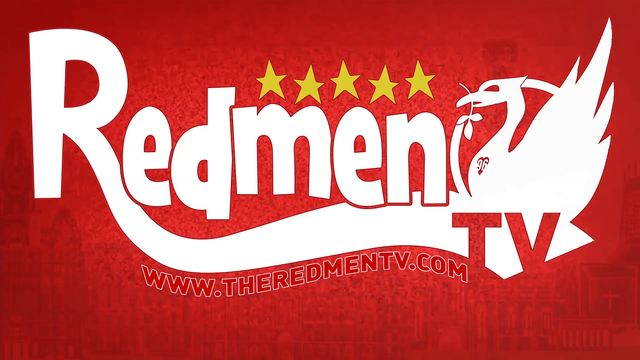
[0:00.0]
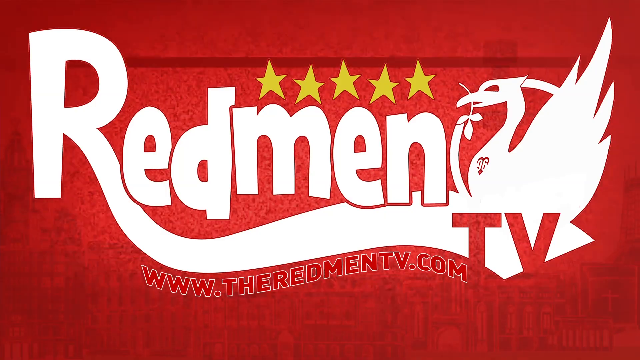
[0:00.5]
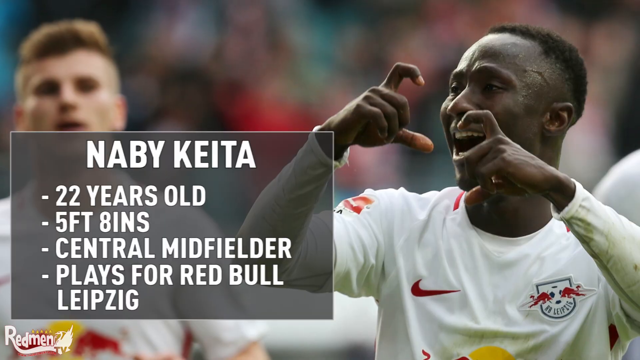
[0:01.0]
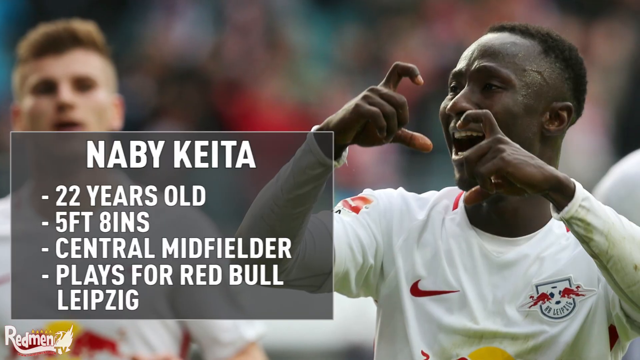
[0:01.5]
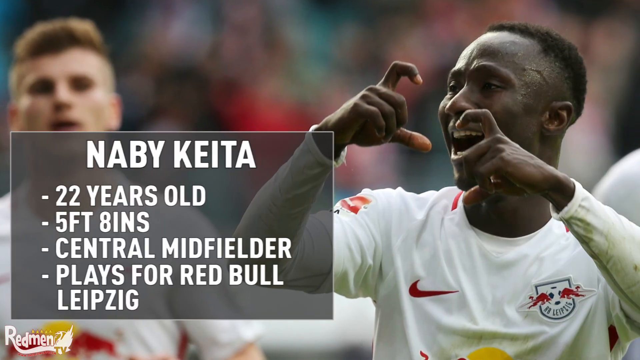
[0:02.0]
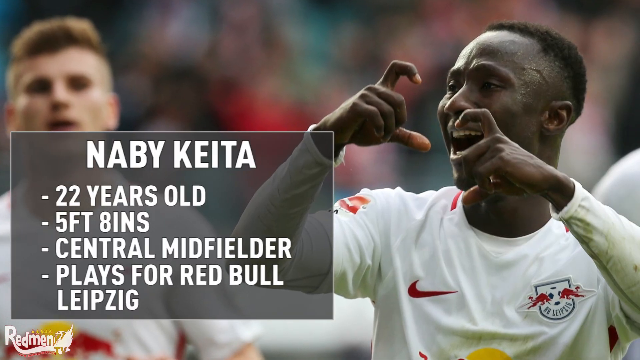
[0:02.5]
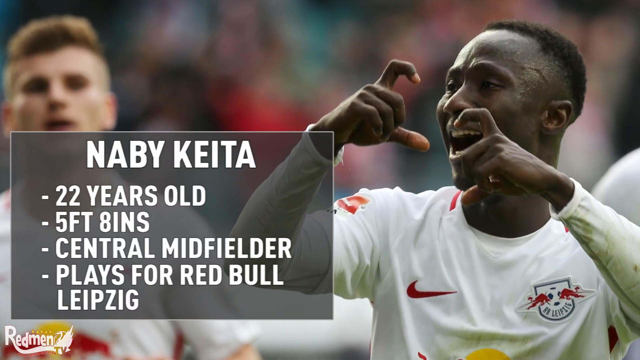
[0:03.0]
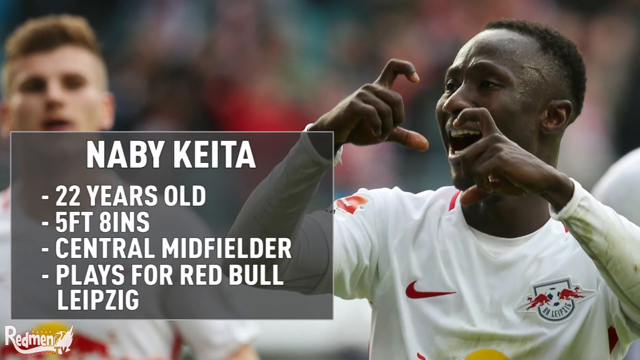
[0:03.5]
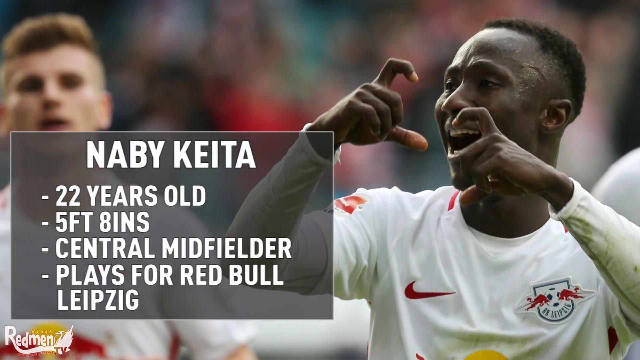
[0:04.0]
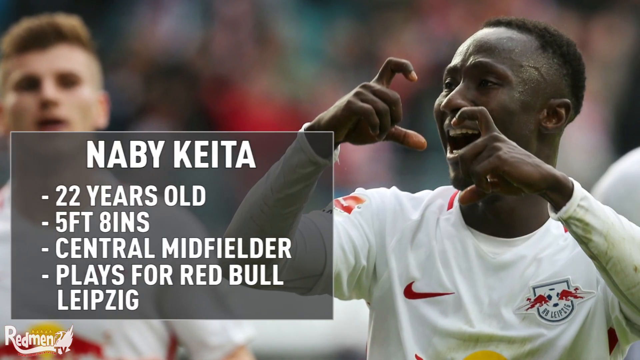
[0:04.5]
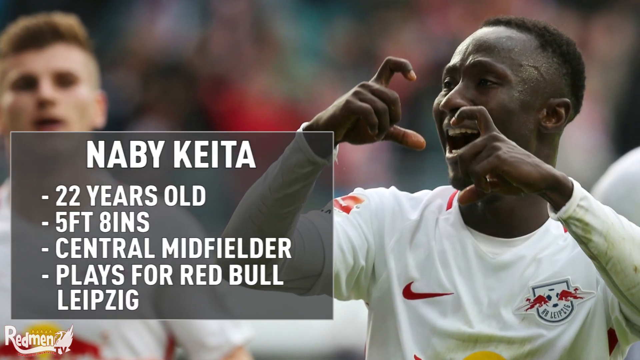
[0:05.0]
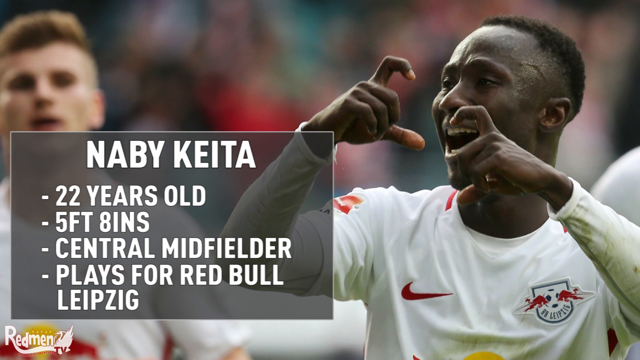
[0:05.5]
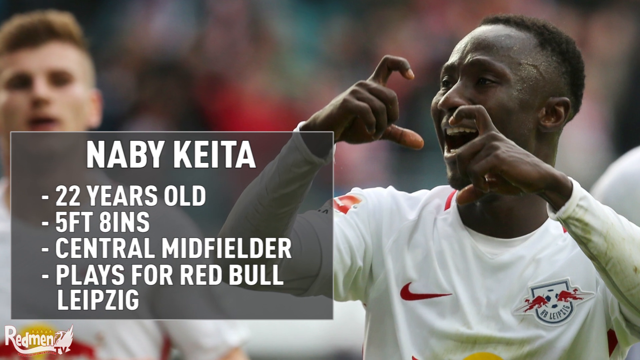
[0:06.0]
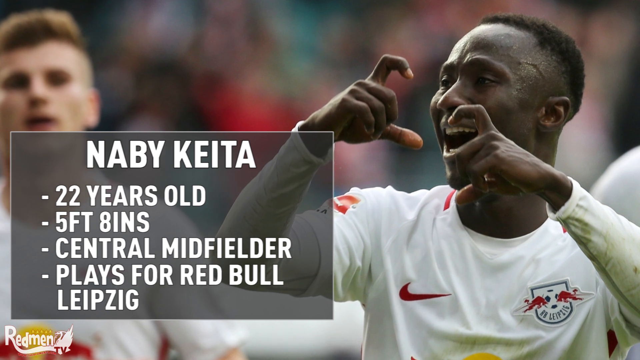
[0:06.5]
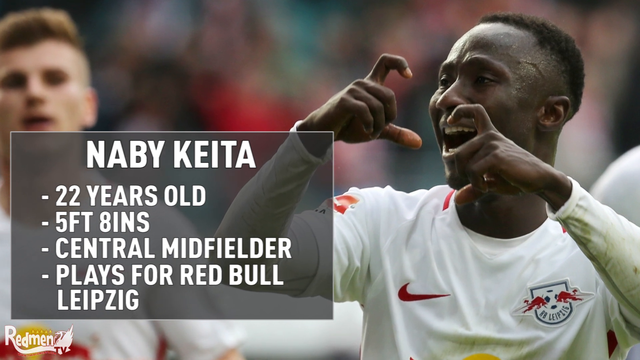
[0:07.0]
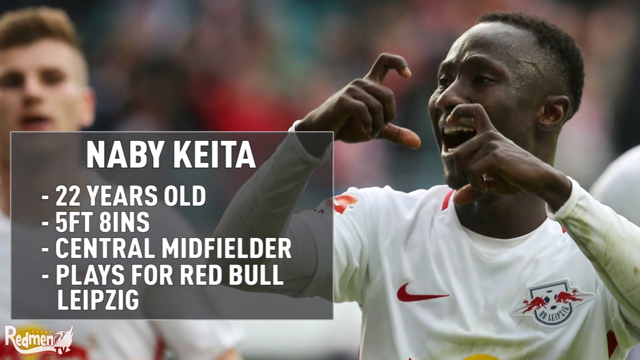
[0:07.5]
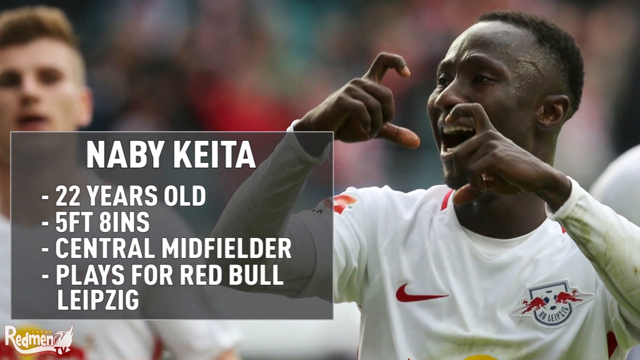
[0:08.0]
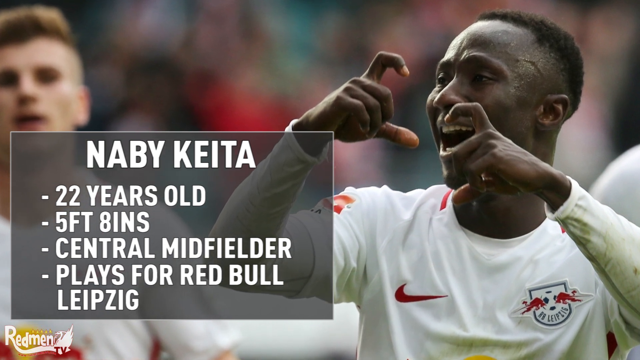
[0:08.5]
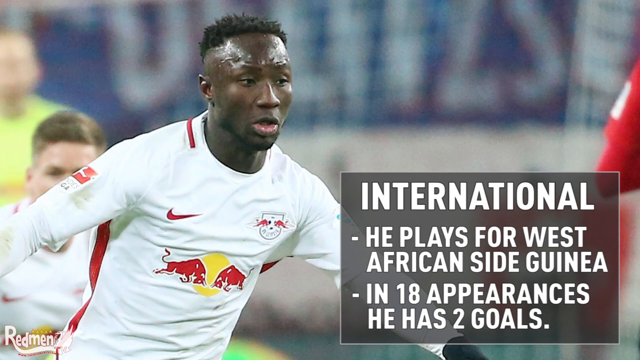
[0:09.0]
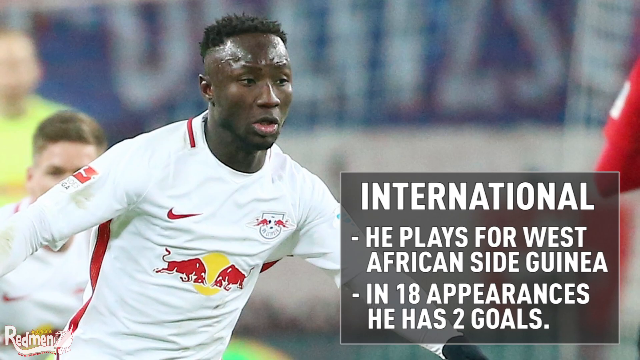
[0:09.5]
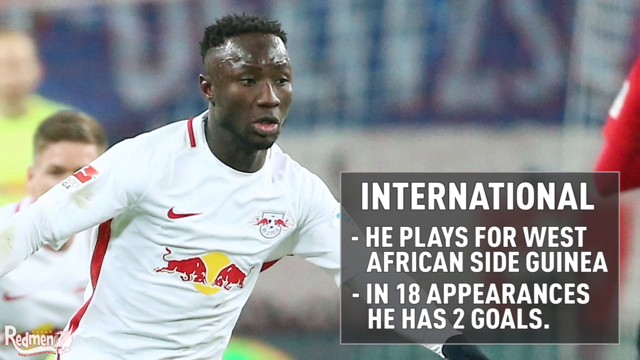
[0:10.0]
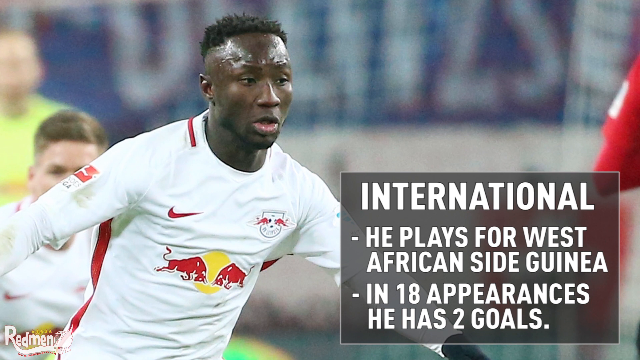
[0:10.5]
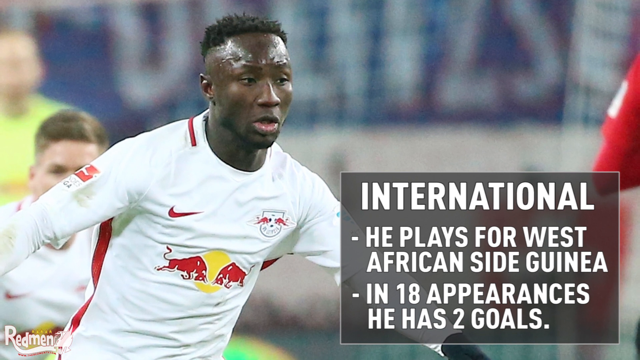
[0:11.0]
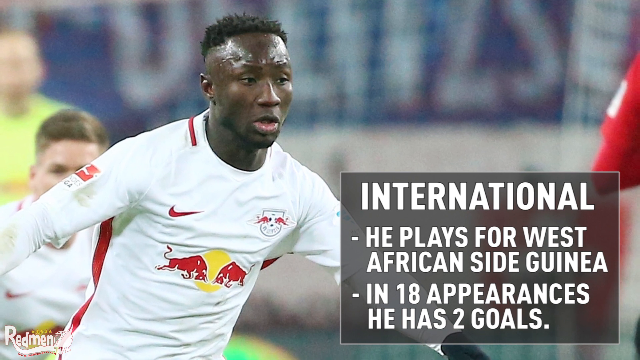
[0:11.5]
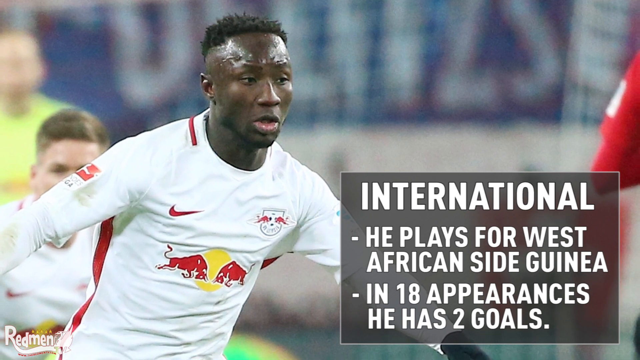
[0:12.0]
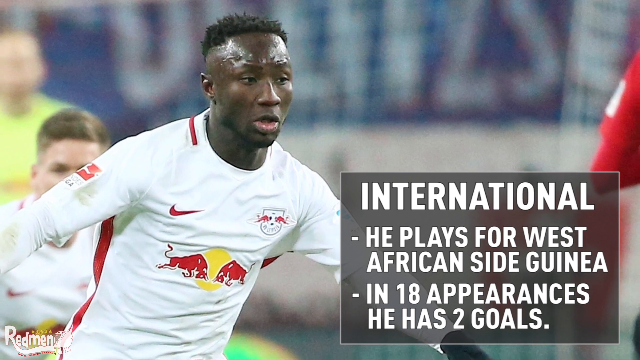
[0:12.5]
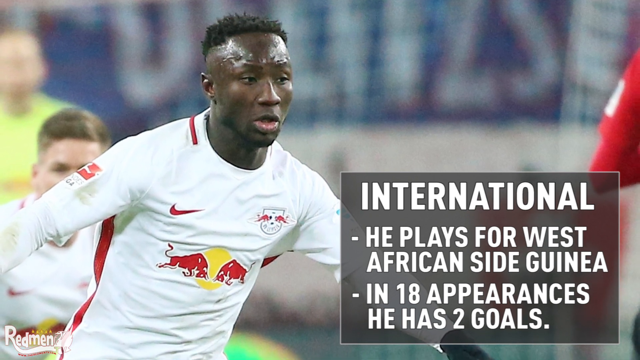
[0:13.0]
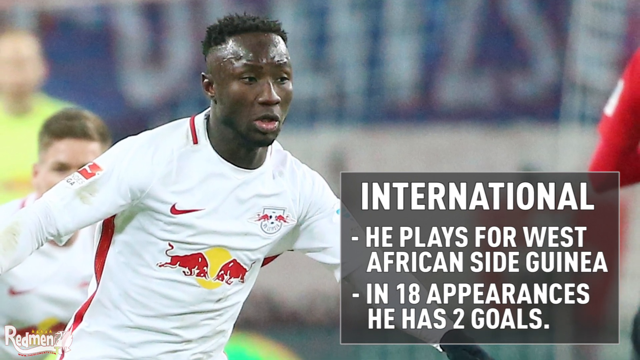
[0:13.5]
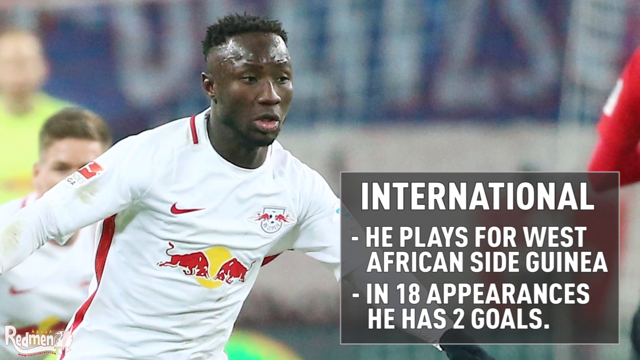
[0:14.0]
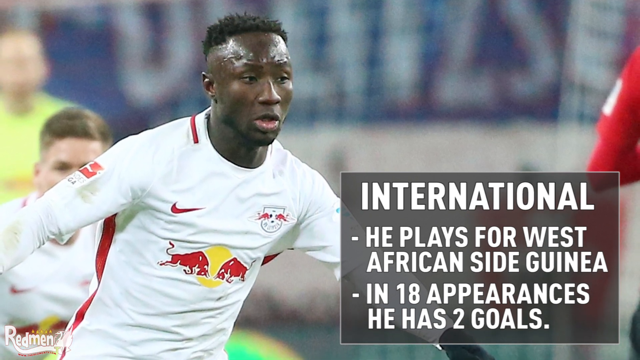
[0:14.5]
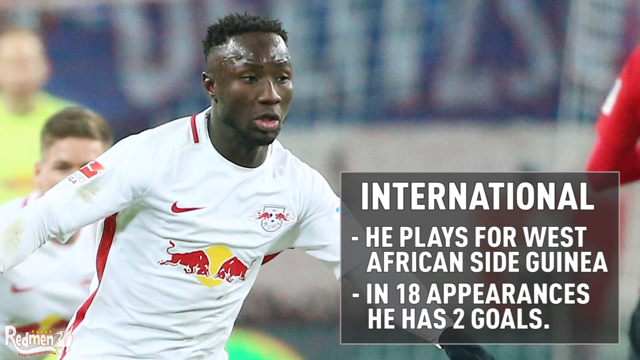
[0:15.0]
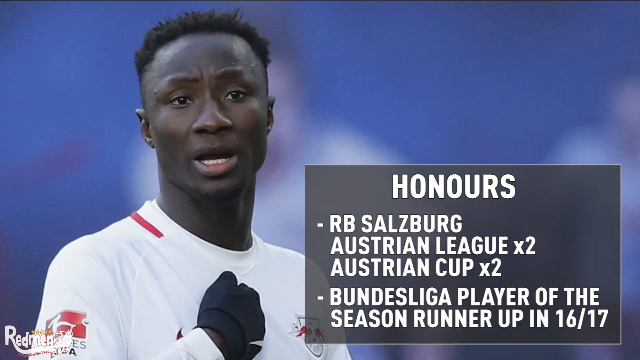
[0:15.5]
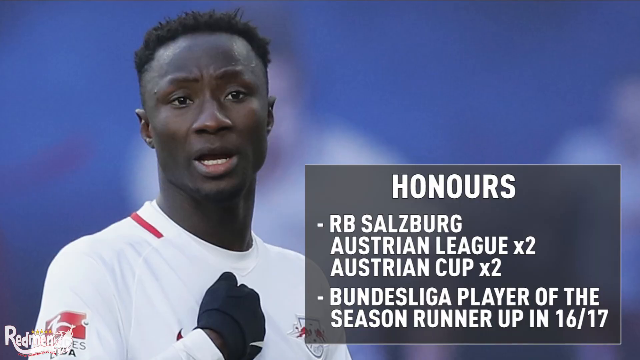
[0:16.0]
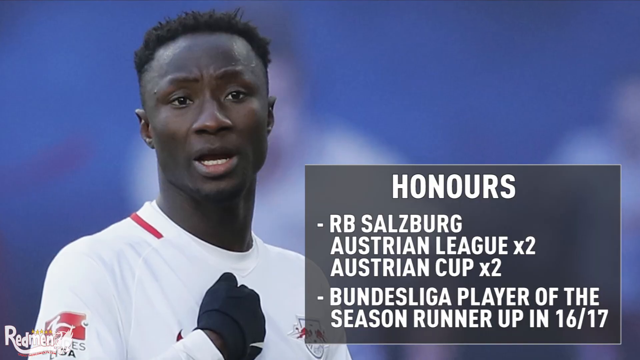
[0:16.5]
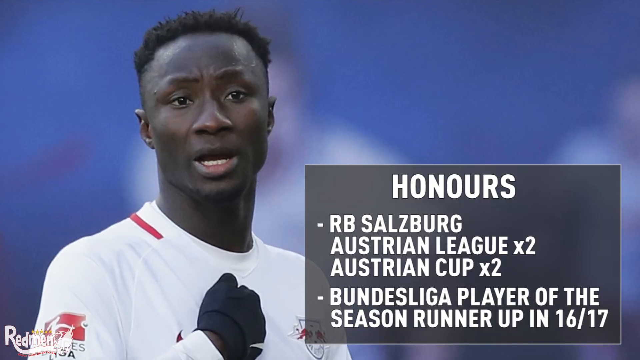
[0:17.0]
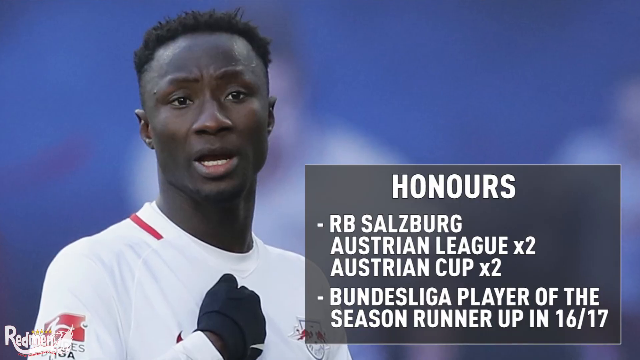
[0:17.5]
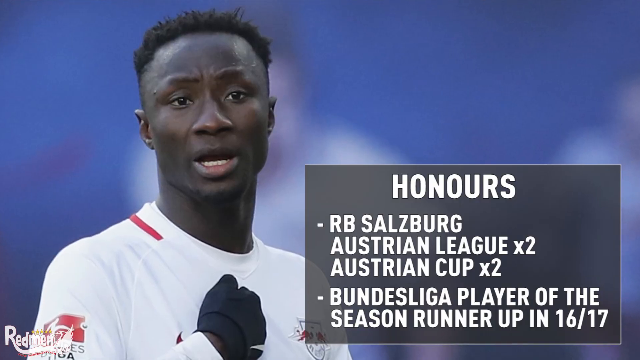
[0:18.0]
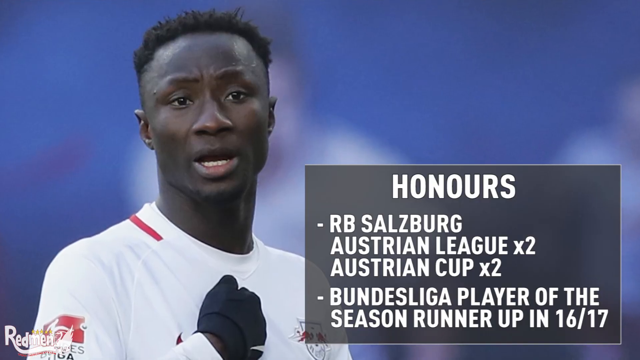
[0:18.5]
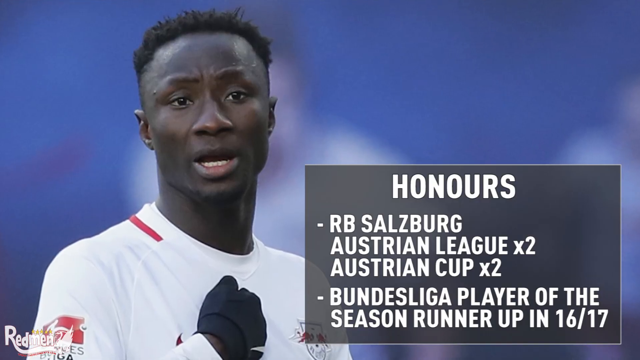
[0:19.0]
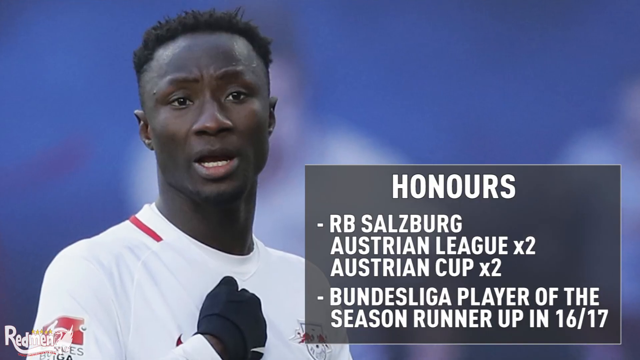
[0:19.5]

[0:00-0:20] The words "Redmond TV" appear with what looks like five stars. A soccer player is then shown: Naby Keita, an African-American man. Text lists that he is 22 years old, 5'8", a central midfielder who plays for Red Bull Leipzig. Under "international", it states that he plays for West African side Guinea, with 18 appearances and two goals. Under "honors", it lists Australian League x2, Australian Cup x2, and player of the season runner-up in 2016-17.